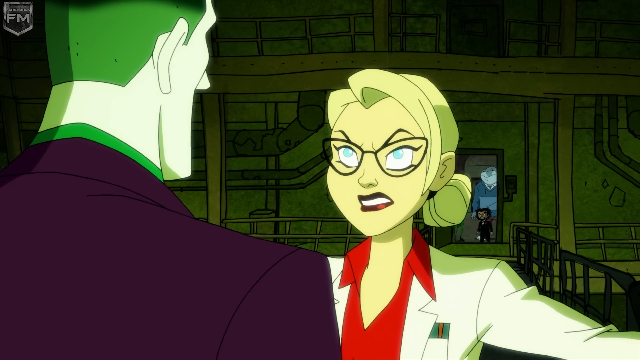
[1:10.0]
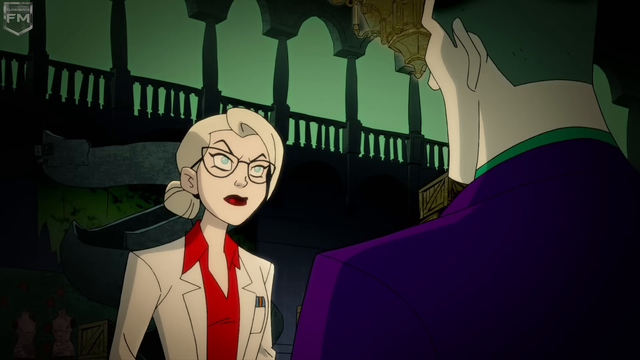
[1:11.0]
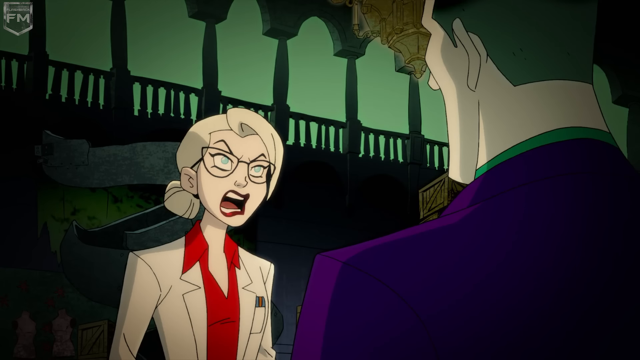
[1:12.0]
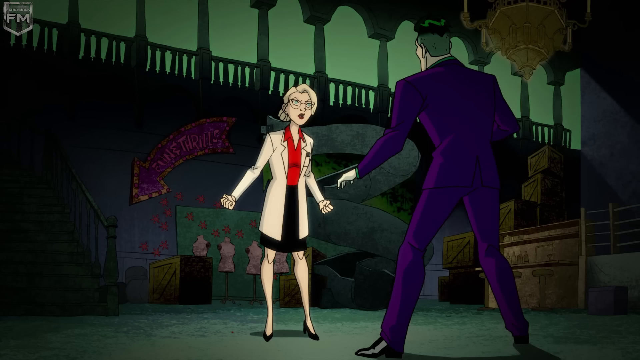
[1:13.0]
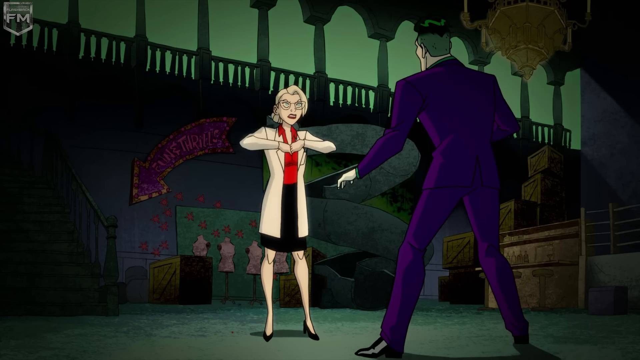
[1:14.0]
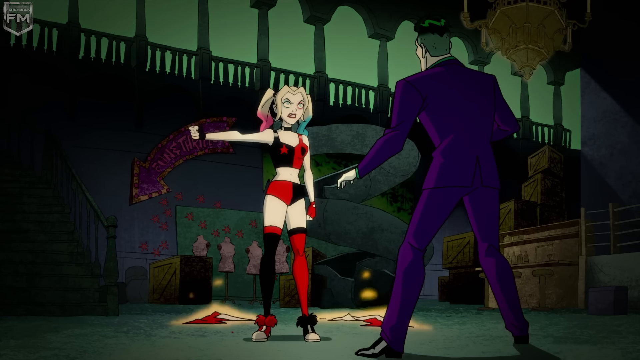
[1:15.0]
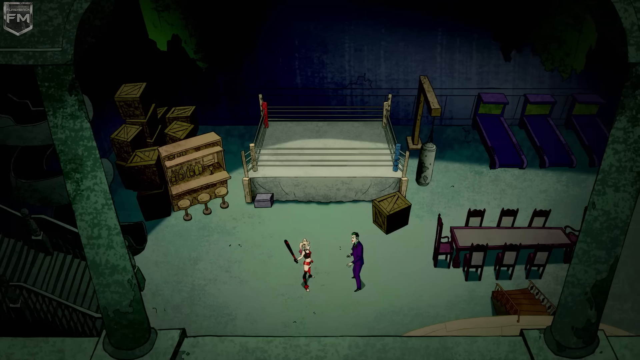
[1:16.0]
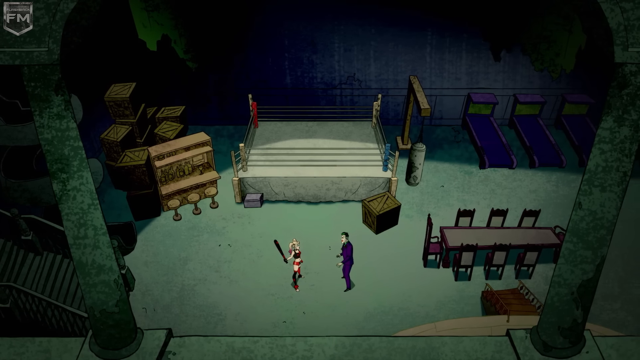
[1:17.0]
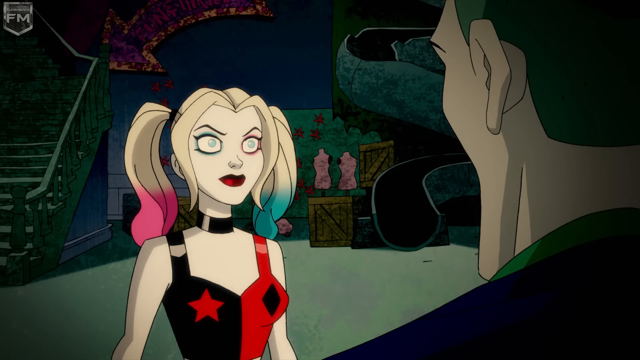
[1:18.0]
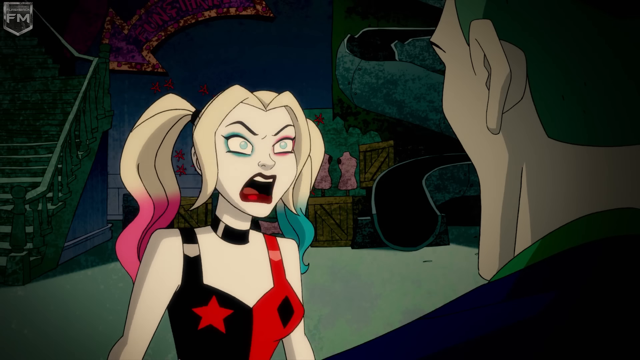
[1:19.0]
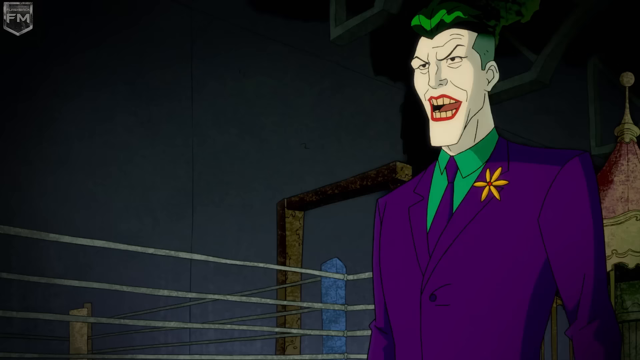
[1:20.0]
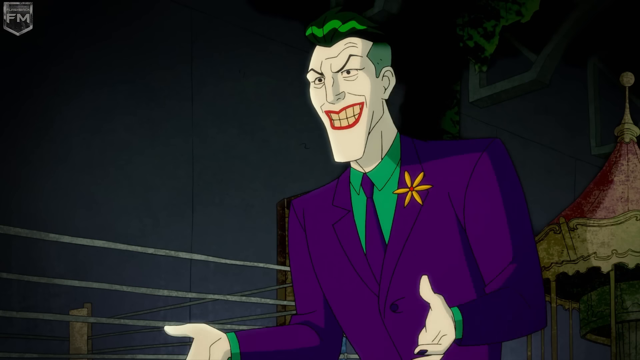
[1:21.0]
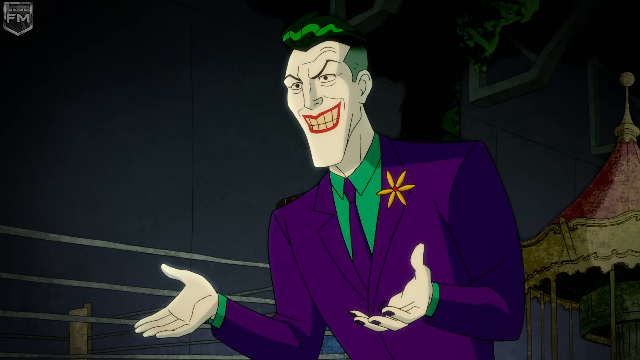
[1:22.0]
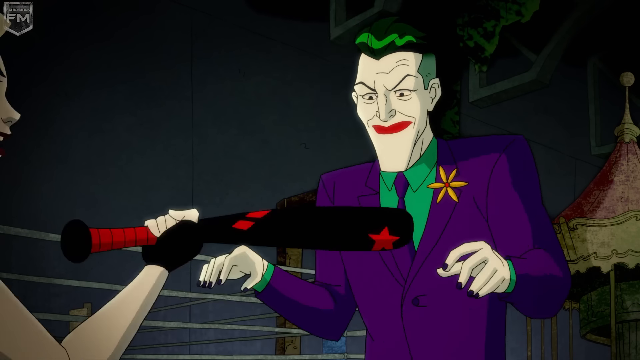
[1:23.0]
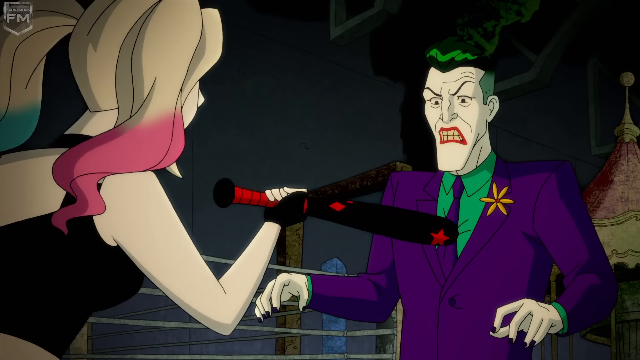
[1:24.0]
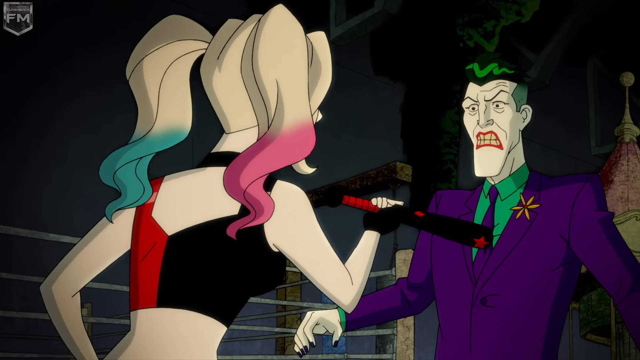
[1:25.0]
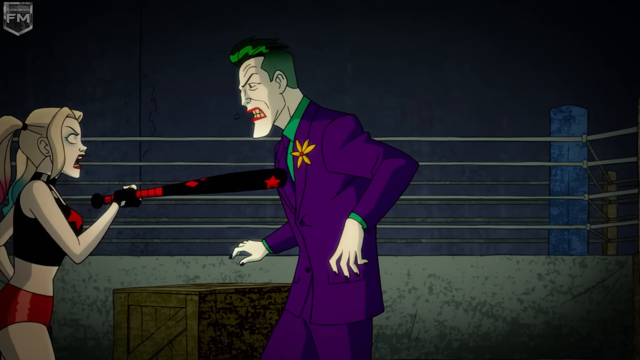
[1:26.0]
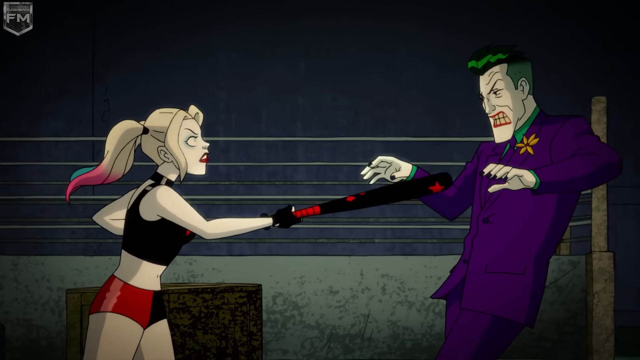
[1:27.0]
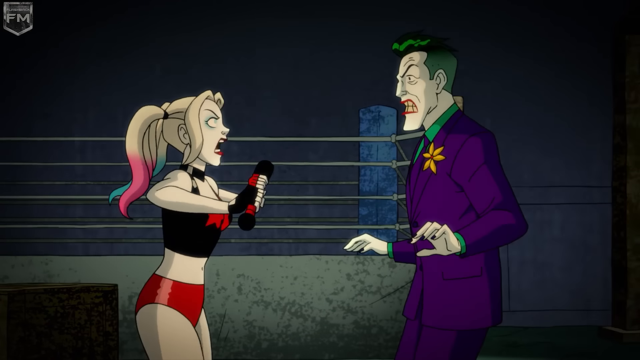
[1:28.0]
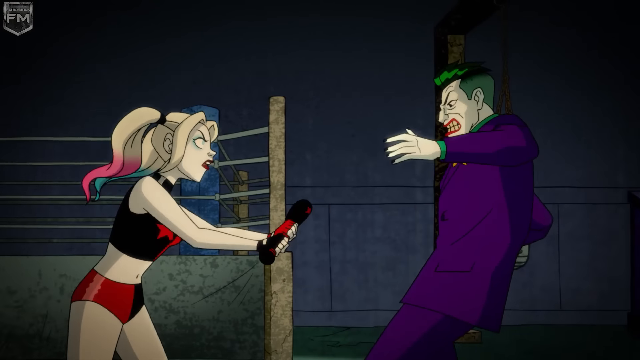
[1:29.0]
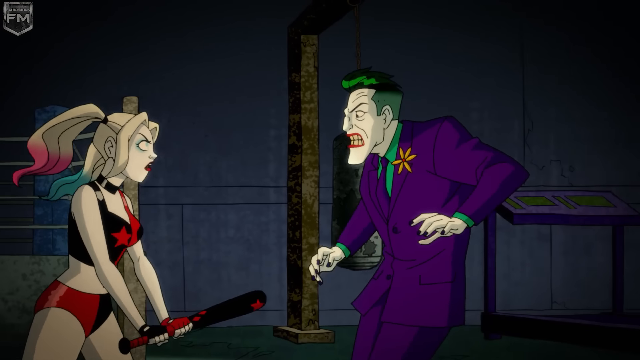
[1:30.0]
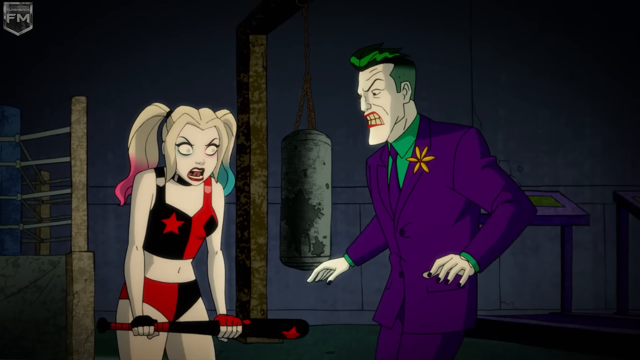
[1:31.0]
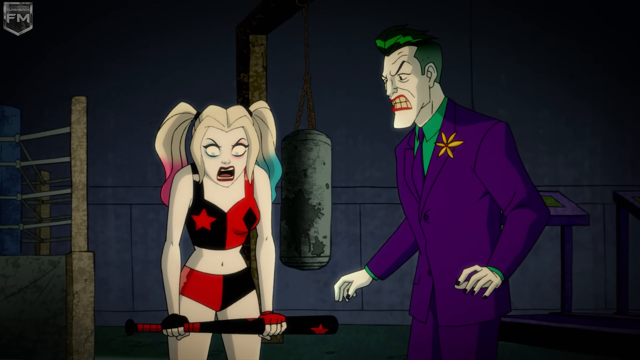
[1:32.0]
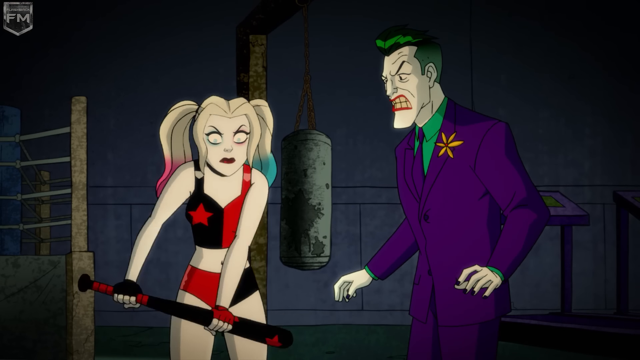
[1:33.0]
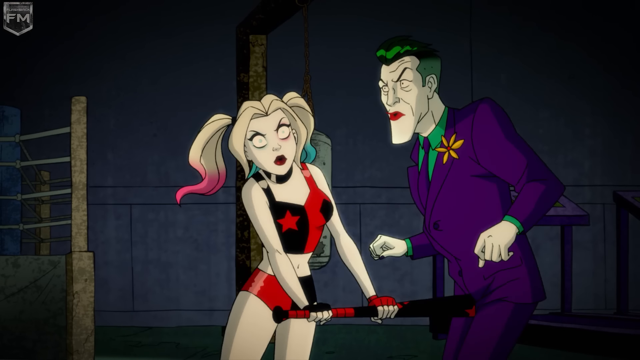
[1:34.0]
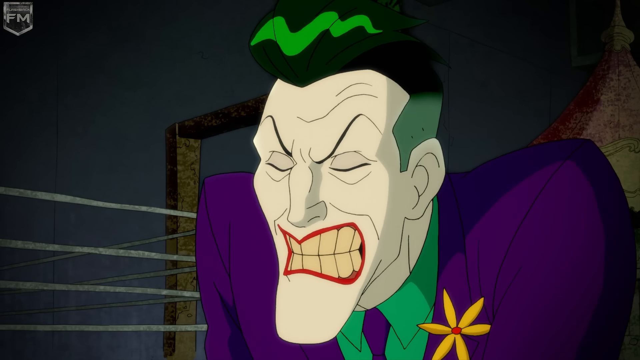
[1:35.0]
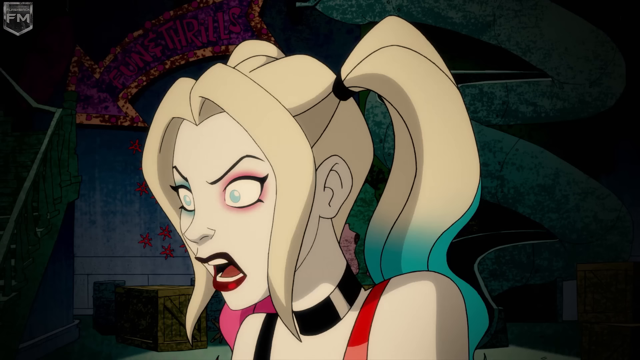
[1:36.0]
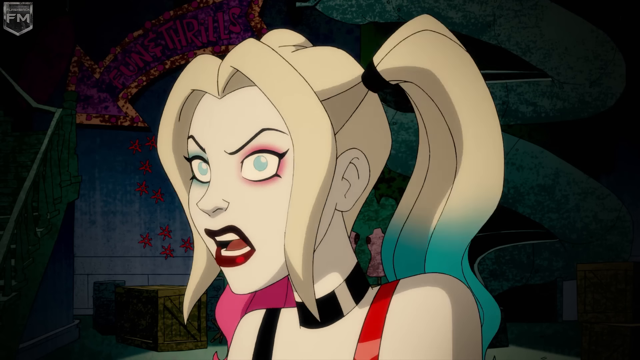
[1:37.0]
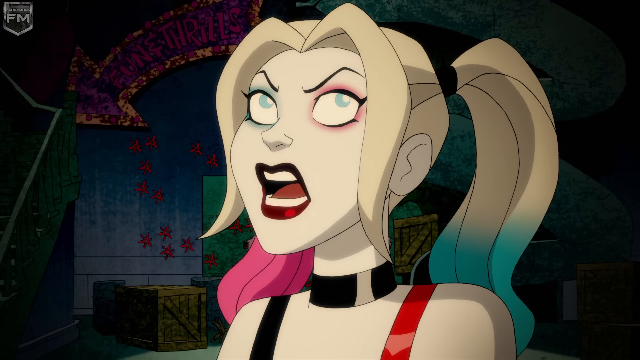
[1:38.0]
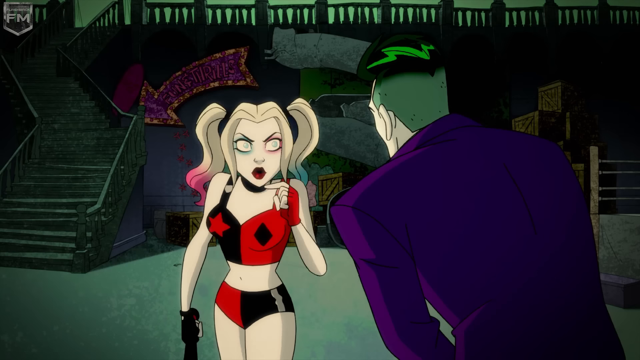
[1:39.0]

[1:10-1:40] In this cartoon animation, a male character with a purple suit and green hair, who looks like the Joker comic character, talks to a woman with blonde hair wearing glasses and a white lab coat. They have a heated discussion, their mouths moving quickly, and the woman has her fists curled up. The woman then pulls off her white lab coat and changes into a different character with blonde pigtails, wearing a black and red outfit and holding a baseball bat in her hand. She and the purple-suited character have a heated discussion; she holds up the baseball bat and points it towards the man's chest, pushing him backwards aggressively. There is a boxing ring and a punching bag in the background, and it looks like they are in a warehouse-type area. The woman points at the man in the suit.